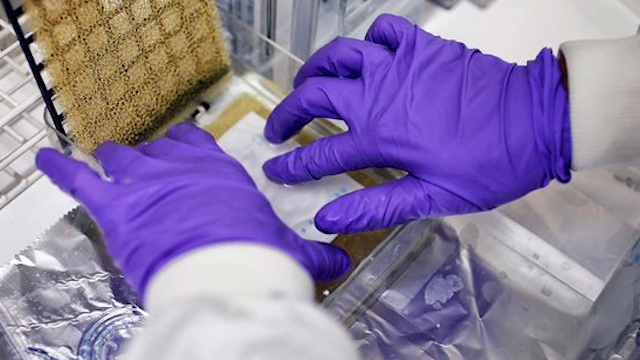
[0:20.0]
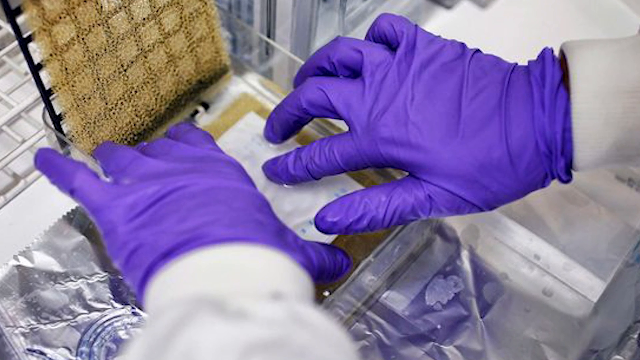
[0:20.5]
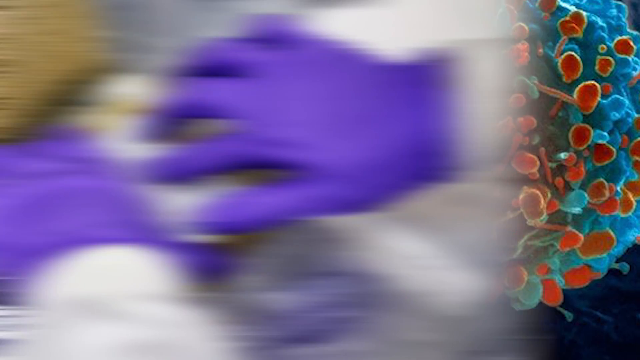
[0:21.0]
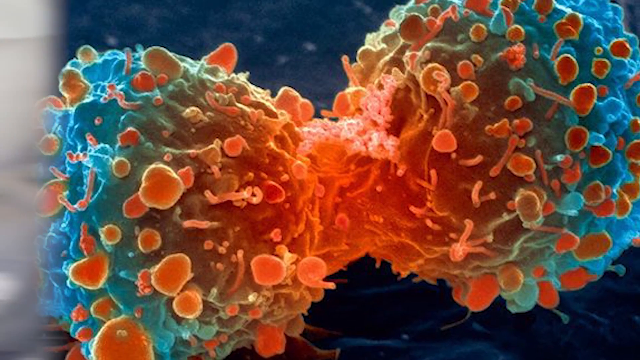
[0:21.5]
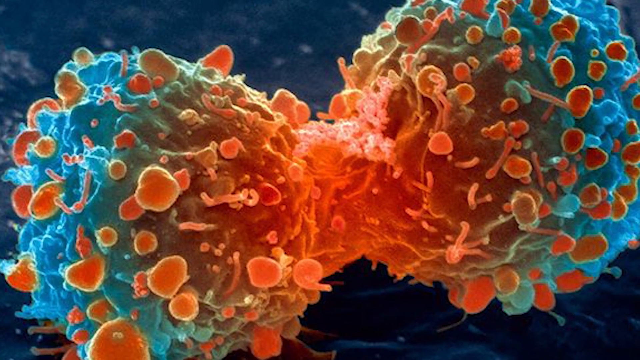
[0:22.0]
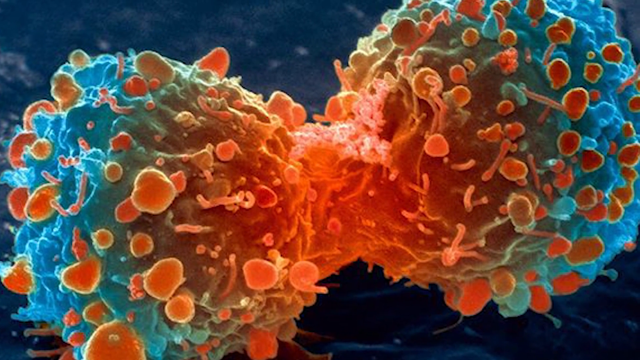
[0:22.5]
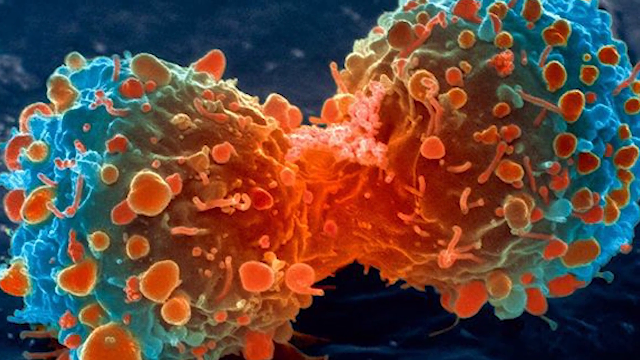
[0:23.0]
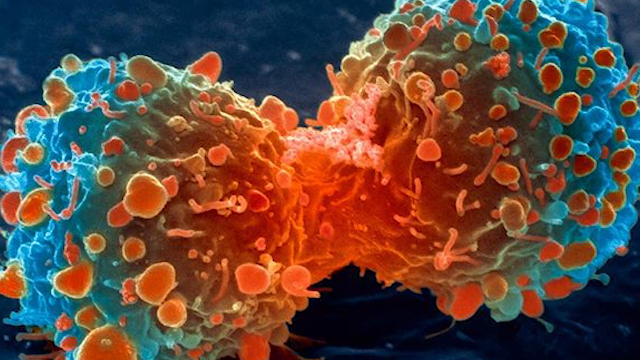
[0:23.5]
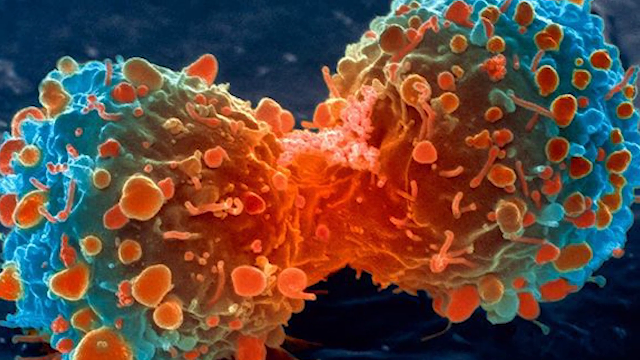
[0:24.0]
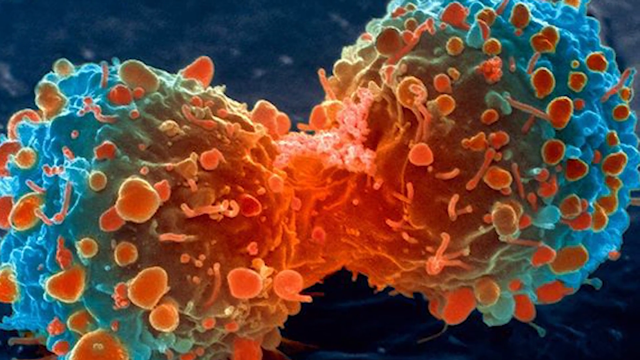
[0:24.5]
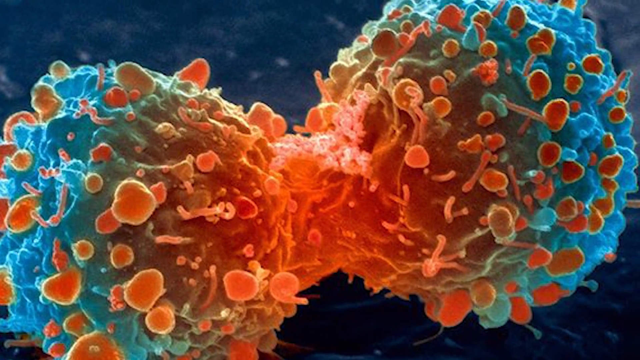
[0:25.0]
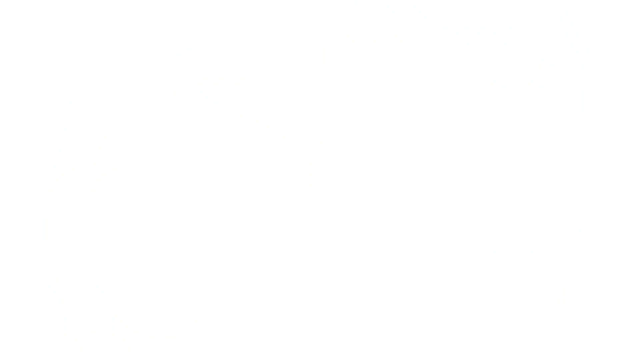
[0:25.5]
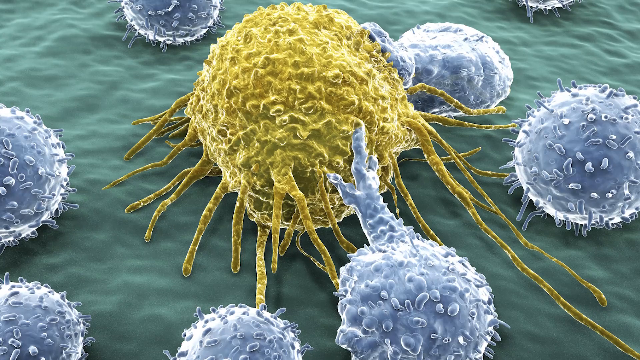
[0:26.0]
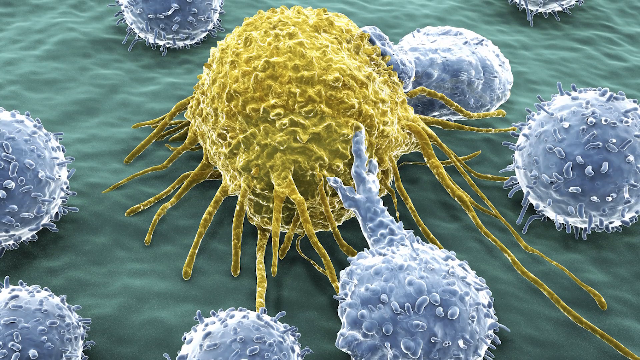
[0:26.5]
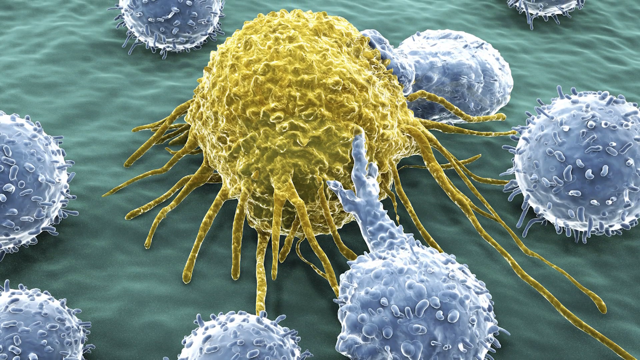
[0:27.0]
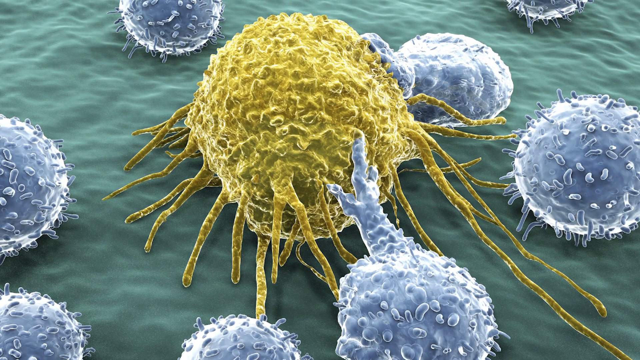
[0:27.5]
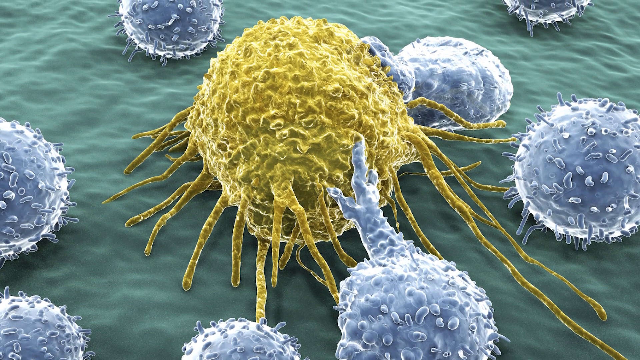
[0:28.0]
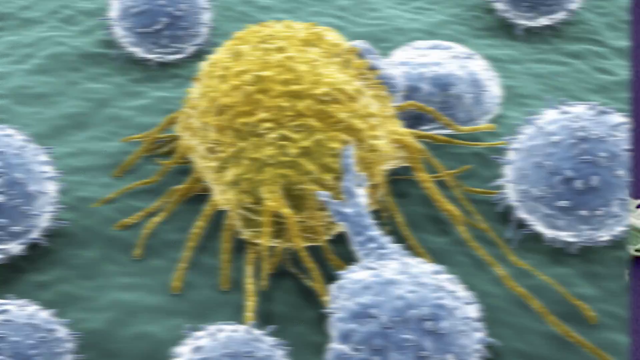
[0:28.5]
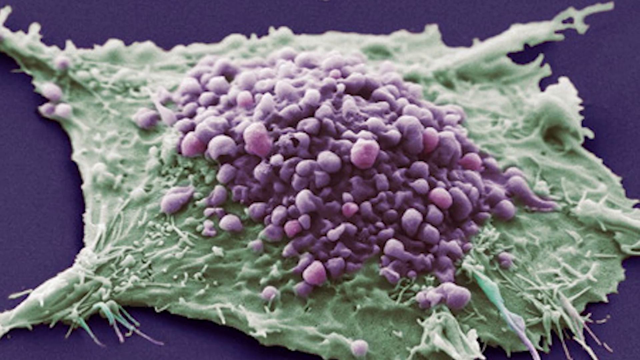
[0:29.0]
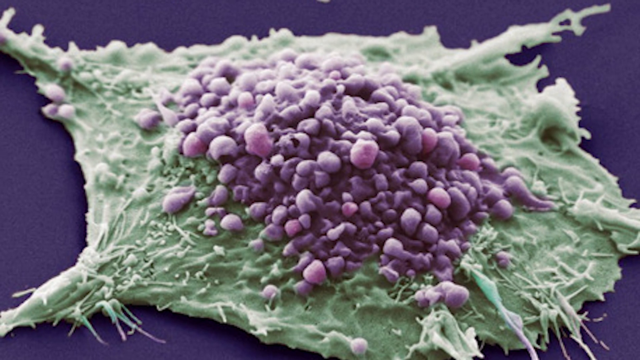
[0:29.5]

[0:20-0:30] Hands in purple plastic gloves reach down inside a square petri dish. The video cuts to what looks like a computer-generated image of a molecule, with teal balls on the left and right sides grouped together by an orange section in the center. Many tiny orange-white balls cover it, connected to the main section by what look like thin hairs, as if viewed closely through a microscope. The camera slowly pans up and to the right. Another image follows: a light gold molecule in the center with very rough edges all over and long hairs extending underneath in all directions. Around it are gray balls with spikes that are rounded on top; one of these balls has a long section like a hand reaching out, grabbing the gold ball in the center. They are on a kind of green, wavy surface. Then comes another close-up, of what looks like a bunch of purple grapes dropped on top of a big green leaf made of play-doh.